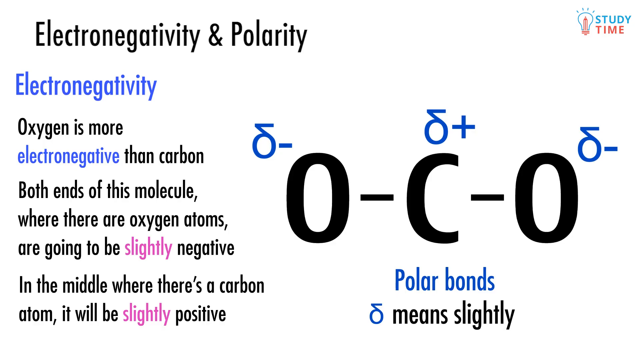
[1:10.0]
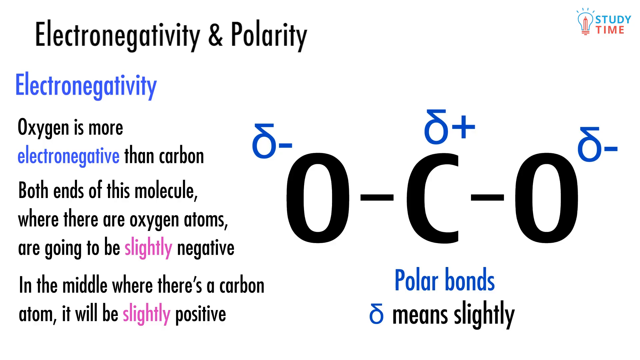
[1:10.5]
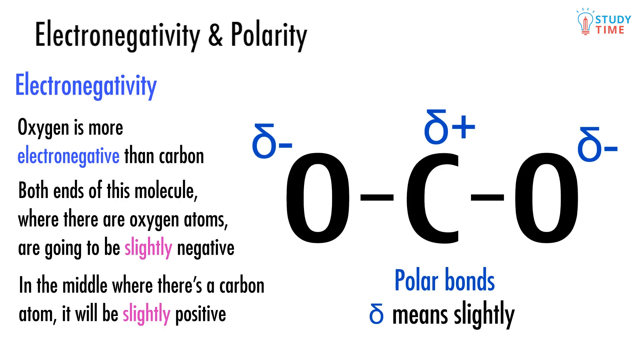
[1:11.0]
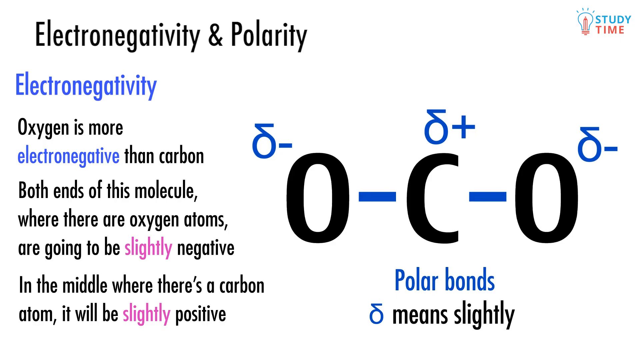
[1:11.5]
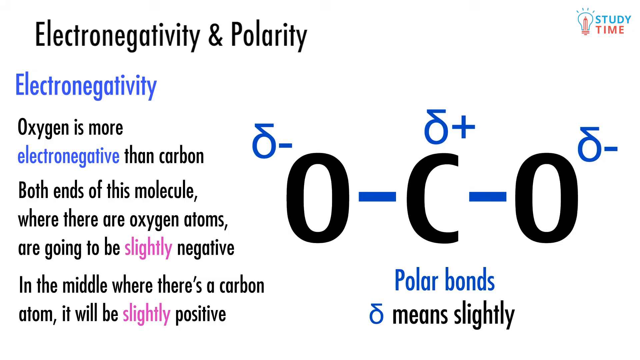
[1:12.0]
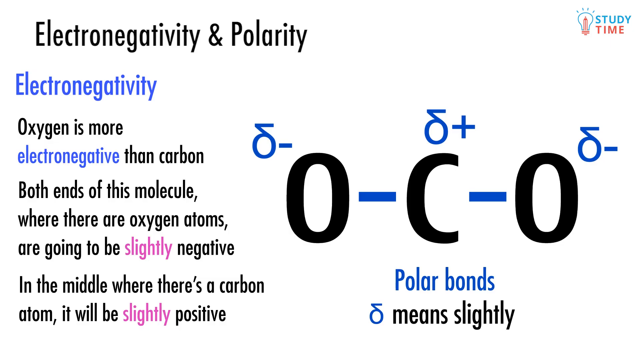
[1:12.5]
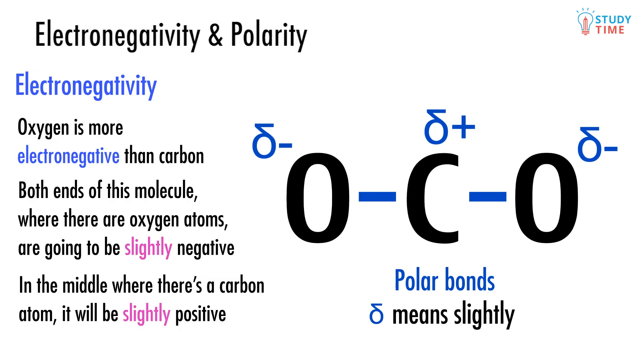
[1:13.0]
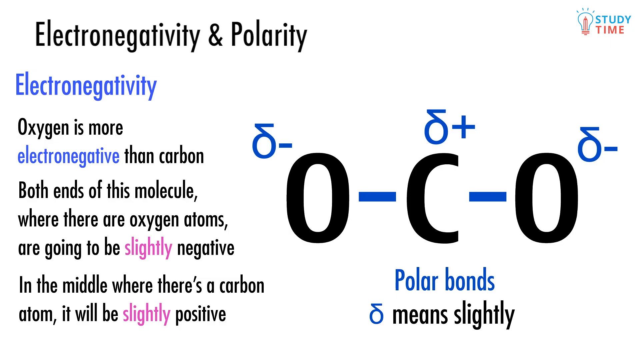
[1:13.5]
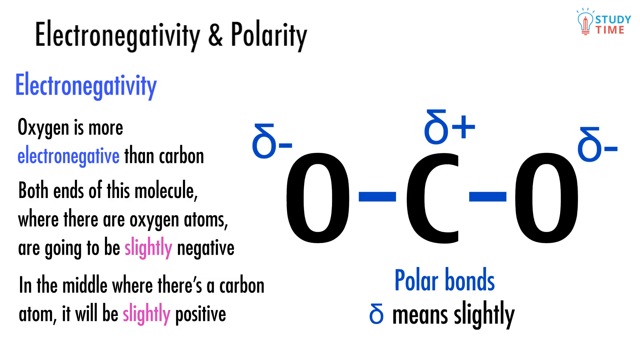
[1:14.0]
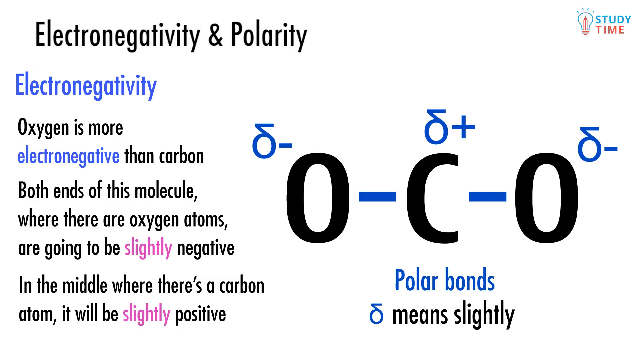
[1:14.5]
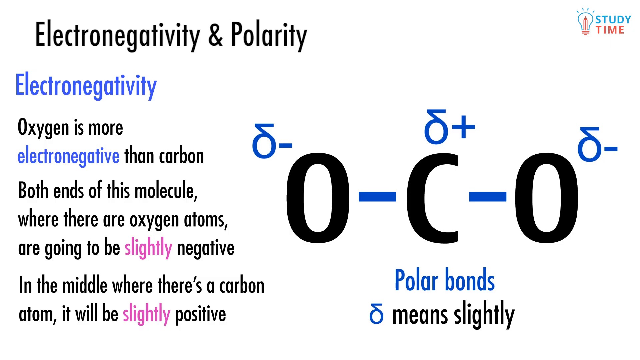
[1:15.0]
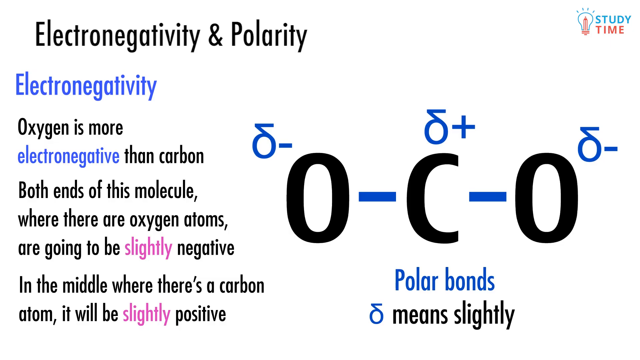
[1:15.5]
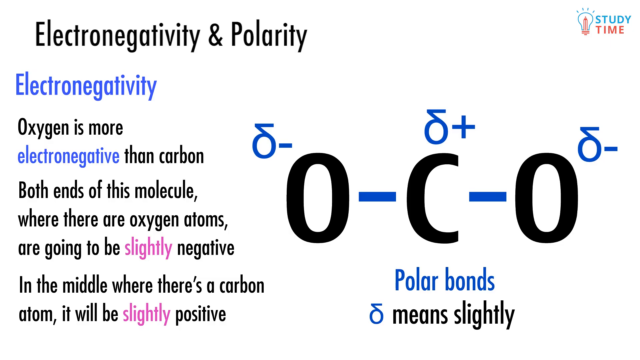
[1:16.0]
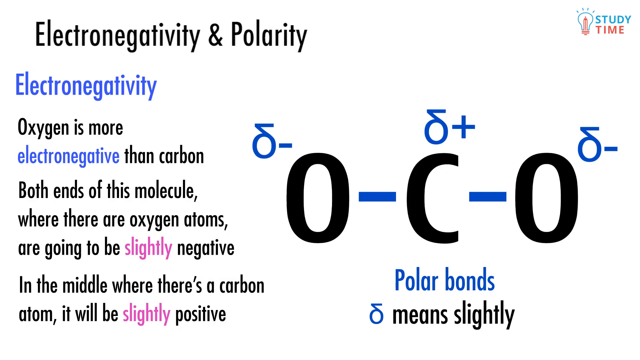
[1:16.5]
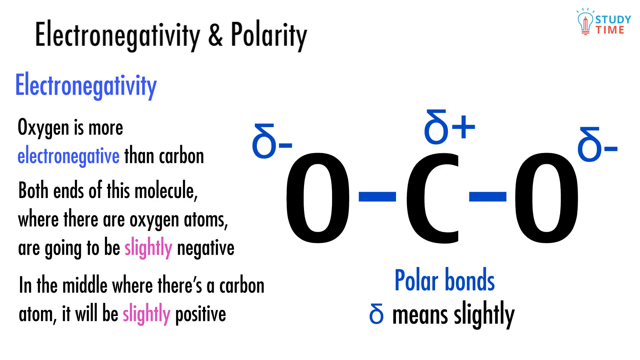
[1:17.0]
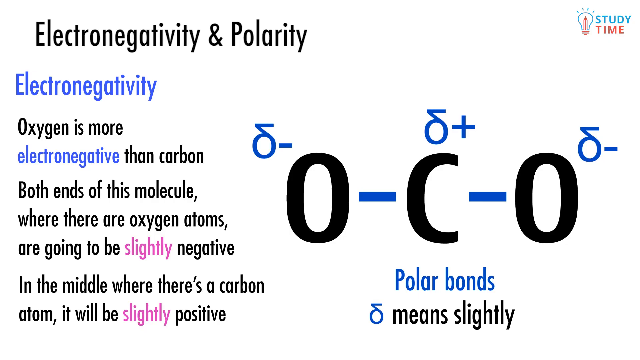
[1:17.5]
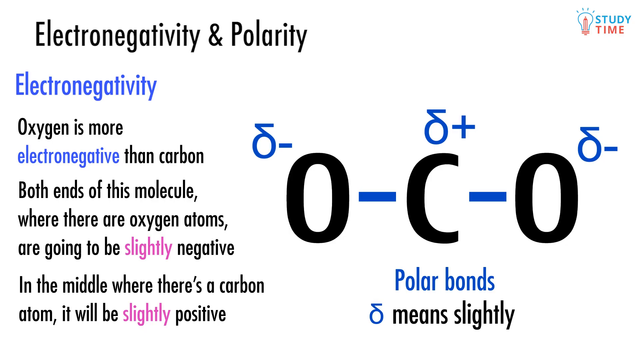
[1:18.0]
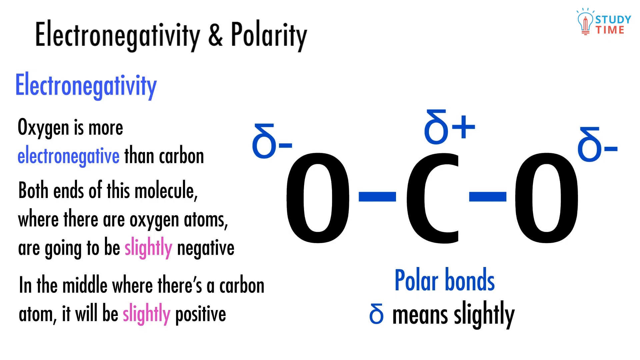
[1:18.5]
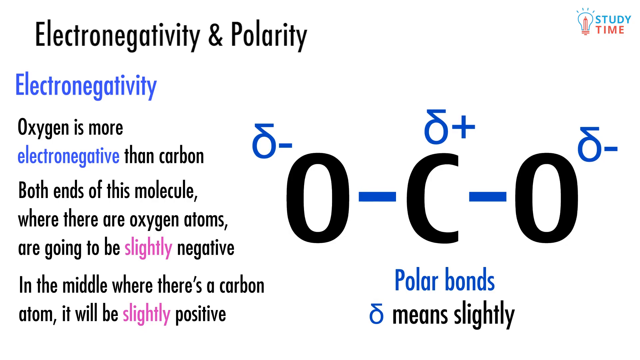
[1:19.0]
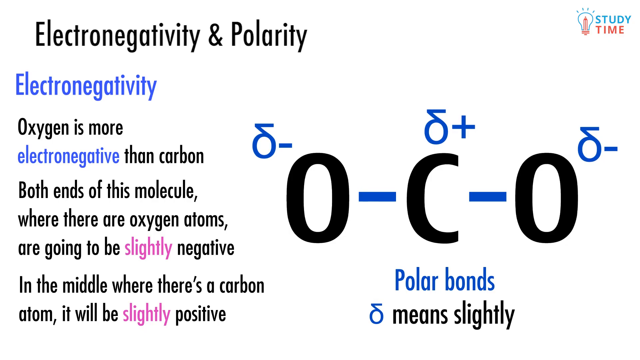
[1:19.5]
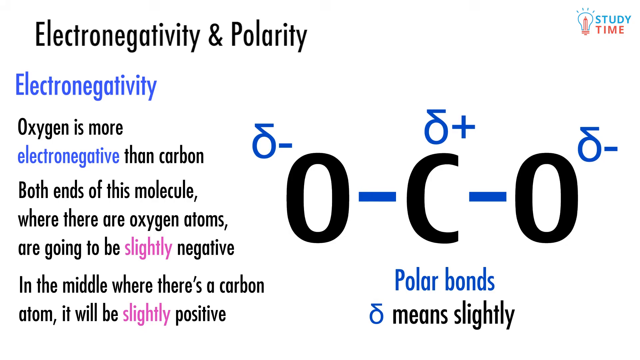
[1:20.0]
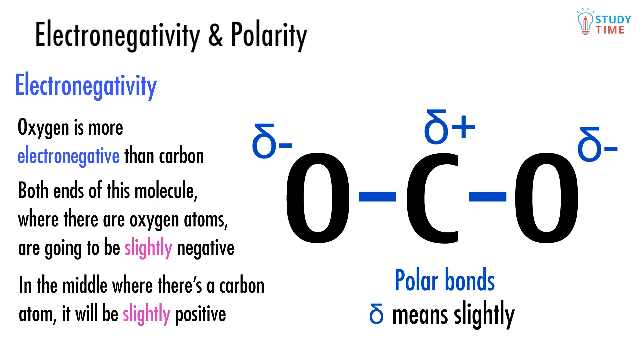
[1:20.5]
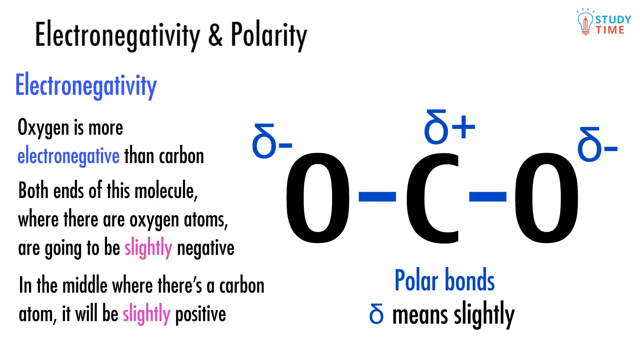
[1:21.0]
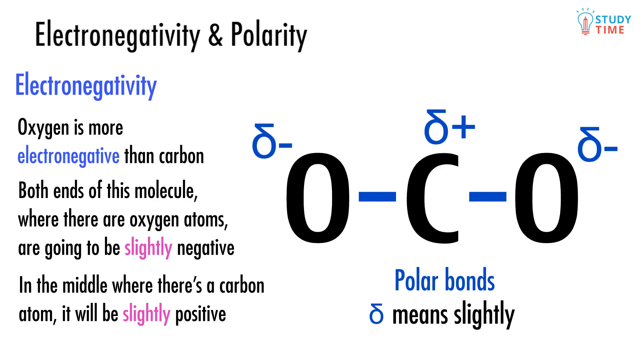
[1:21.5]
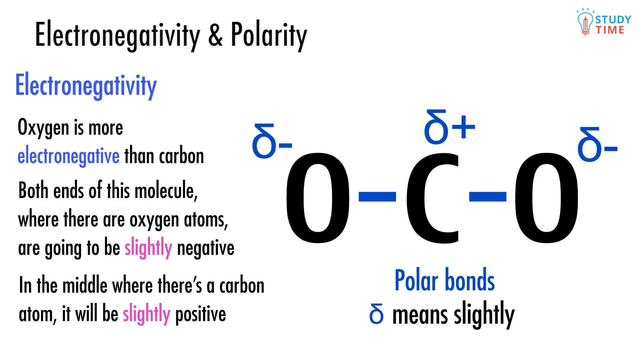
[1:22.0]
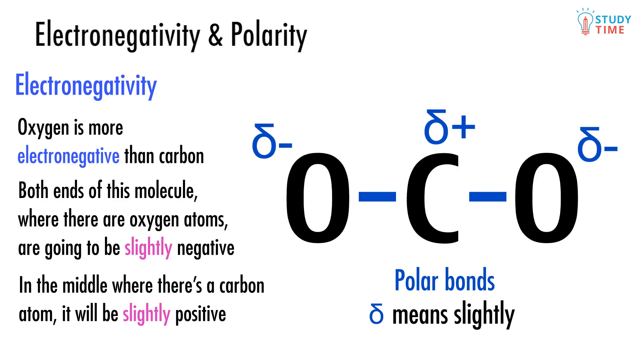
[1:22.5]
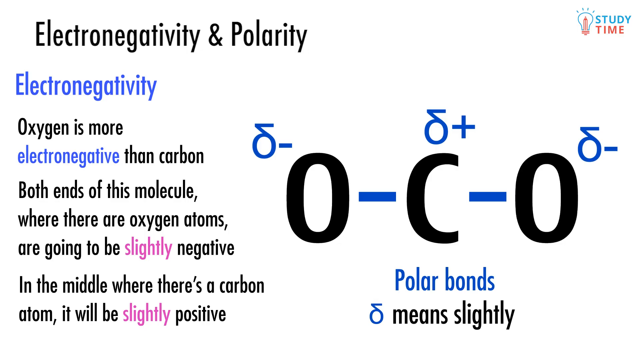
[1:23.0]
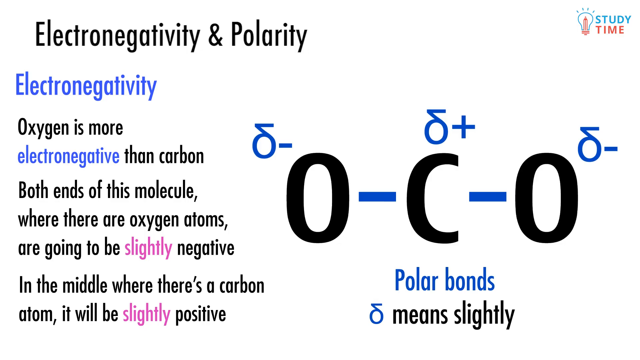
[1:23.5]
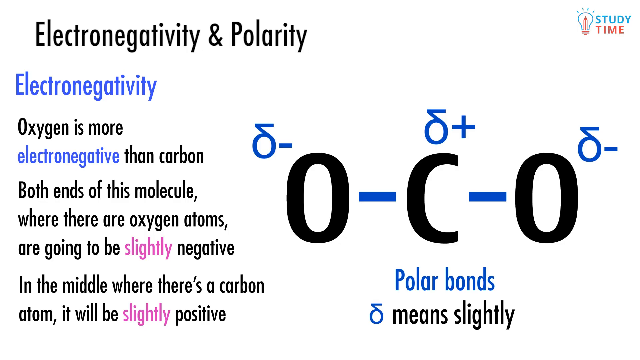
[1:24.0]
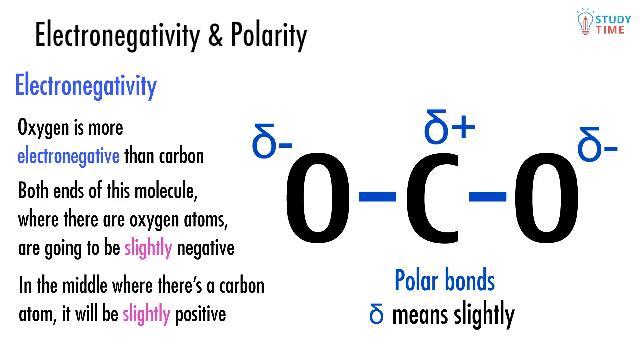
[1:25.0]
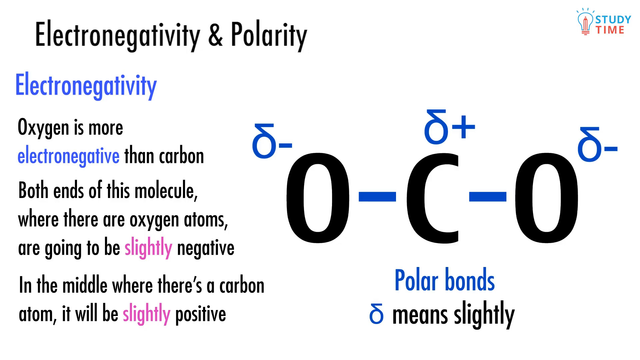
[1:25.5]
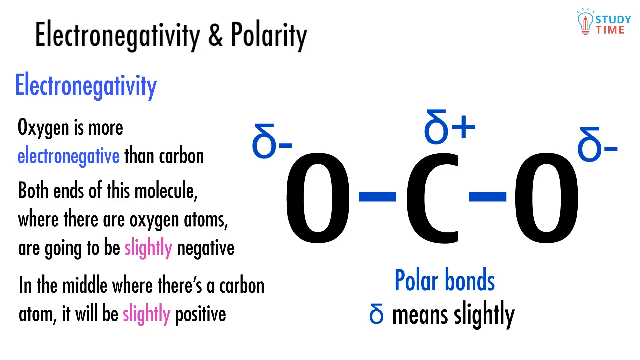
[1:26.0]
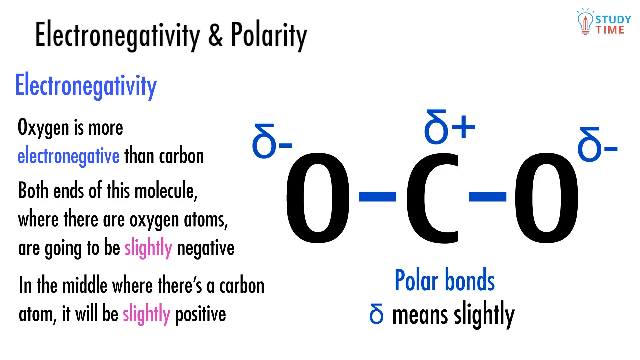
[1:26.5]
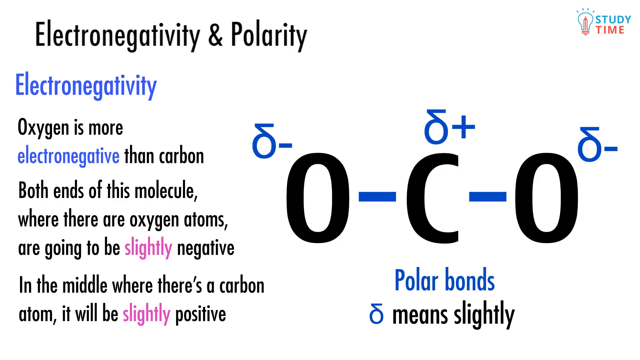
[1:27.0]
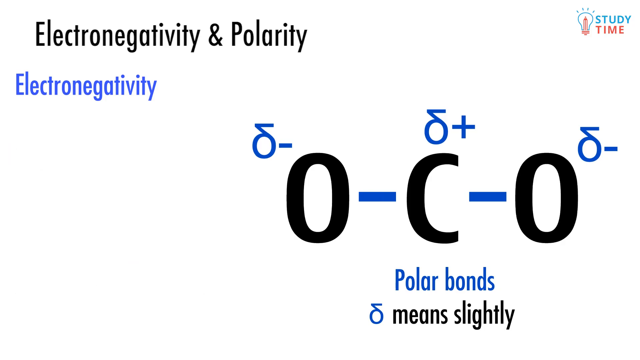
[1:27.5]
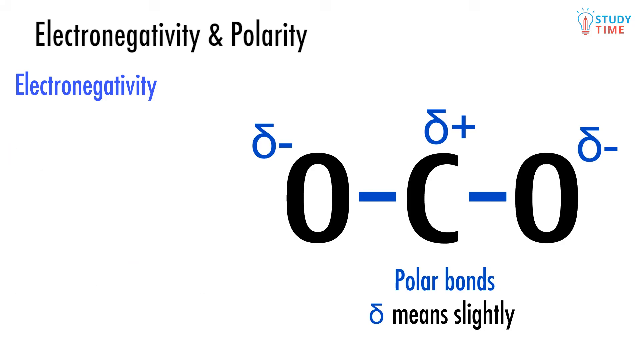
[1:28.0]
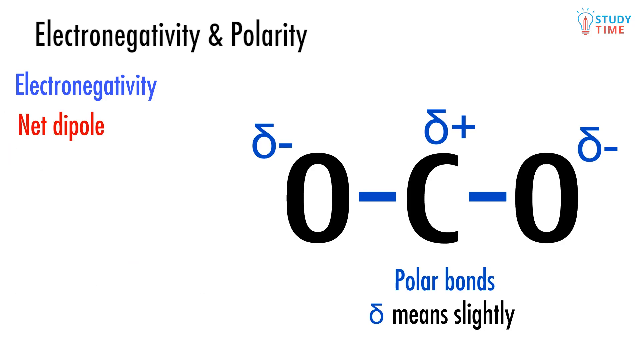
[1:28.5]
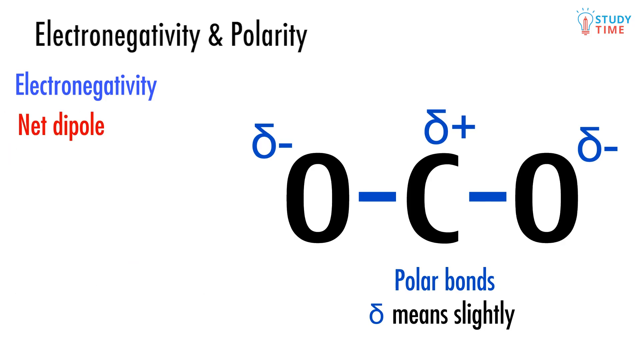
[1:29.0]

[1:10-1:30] At first nothing changes; the "polar bonds" text remains at the bottom. The screen is busy with all the elements and definitions, which filled up over time rather than appearing all at once. Then the text below "electronegativity" changes: "electronegativity" is in blue, and the bold text below it switches to a new word, "net dipole", in red.